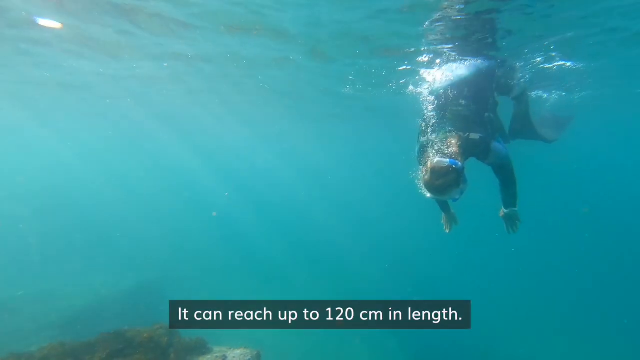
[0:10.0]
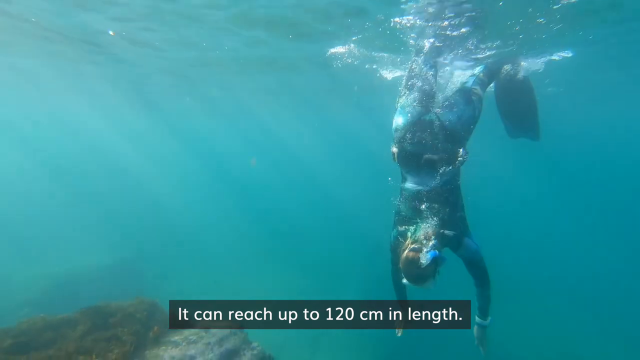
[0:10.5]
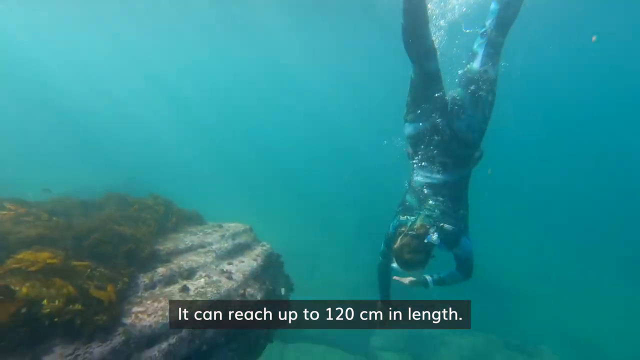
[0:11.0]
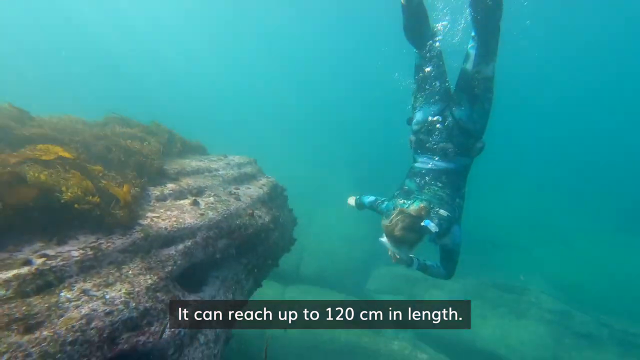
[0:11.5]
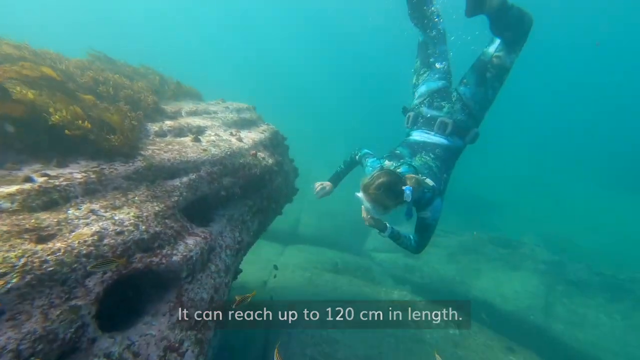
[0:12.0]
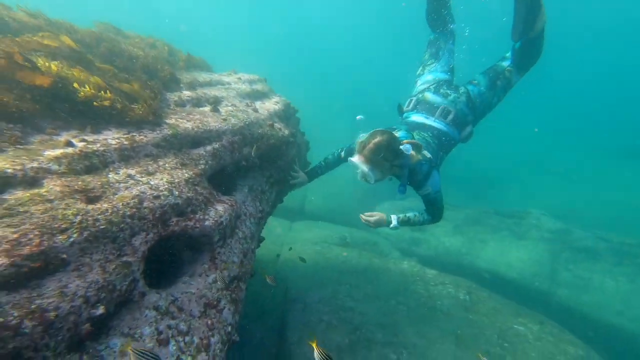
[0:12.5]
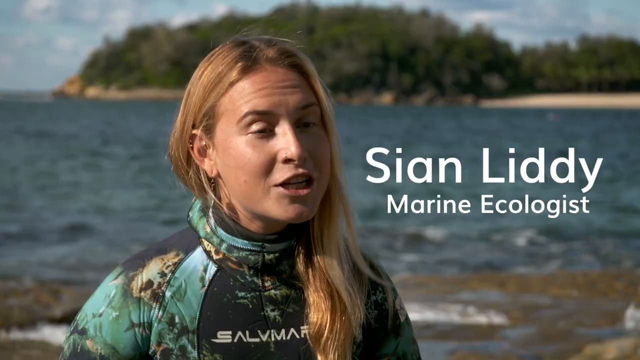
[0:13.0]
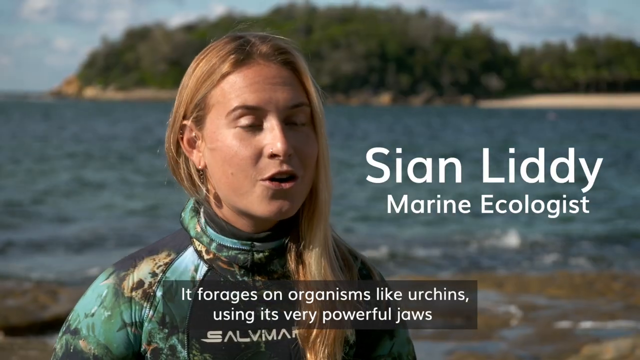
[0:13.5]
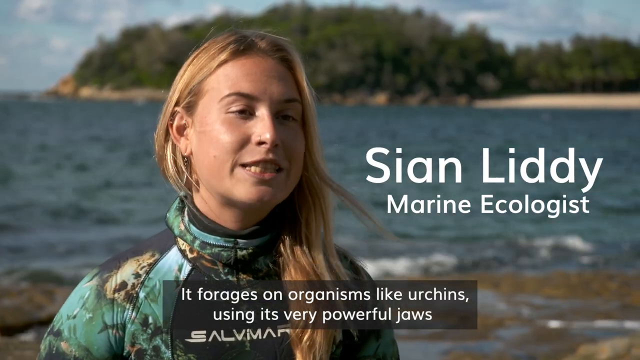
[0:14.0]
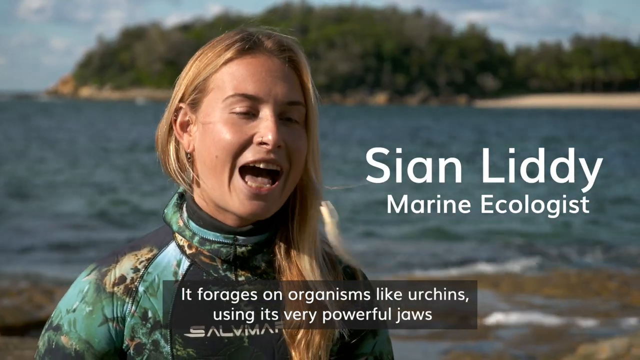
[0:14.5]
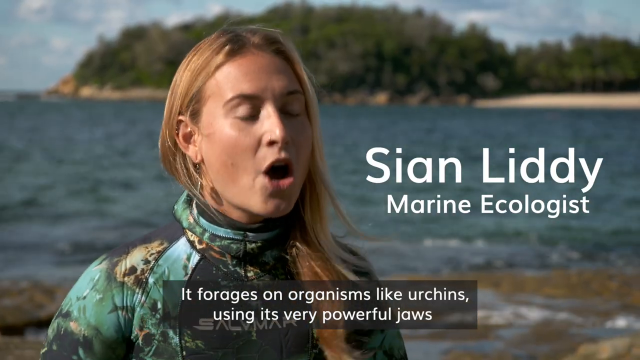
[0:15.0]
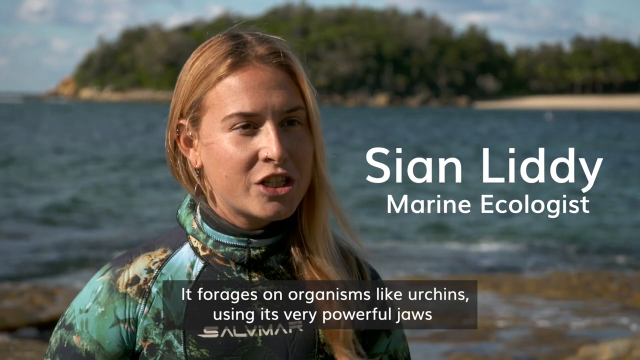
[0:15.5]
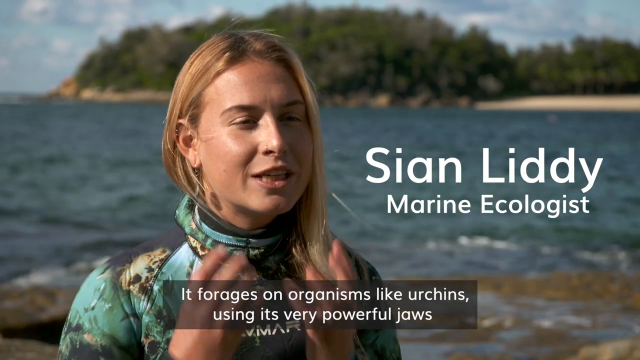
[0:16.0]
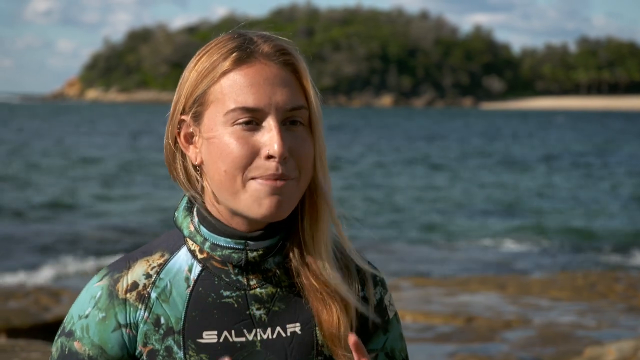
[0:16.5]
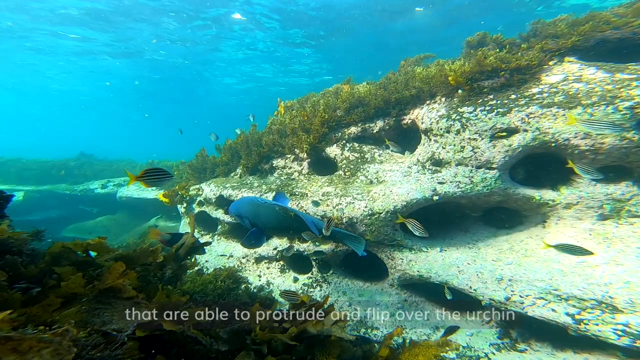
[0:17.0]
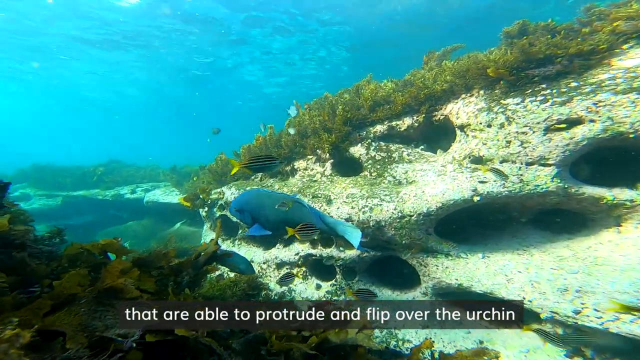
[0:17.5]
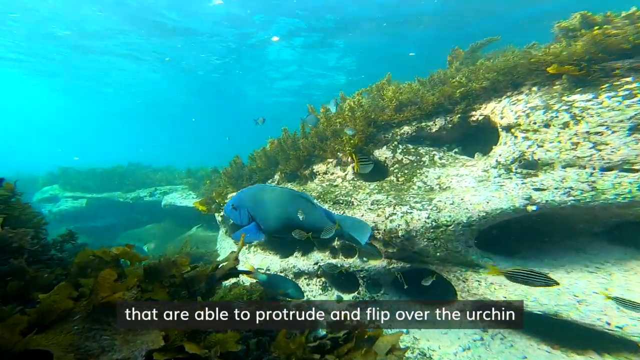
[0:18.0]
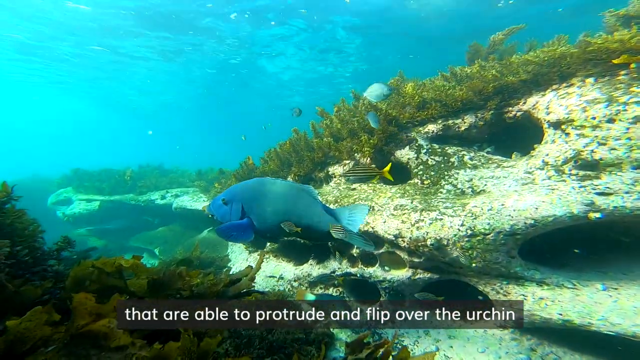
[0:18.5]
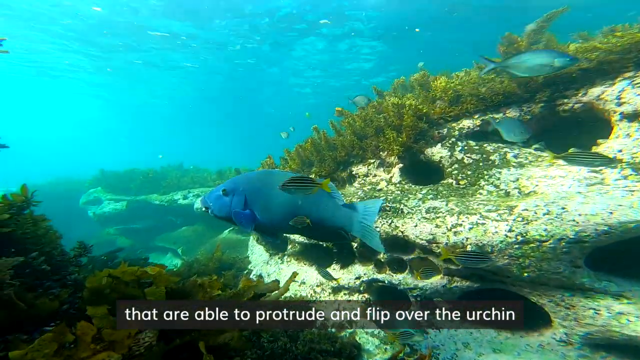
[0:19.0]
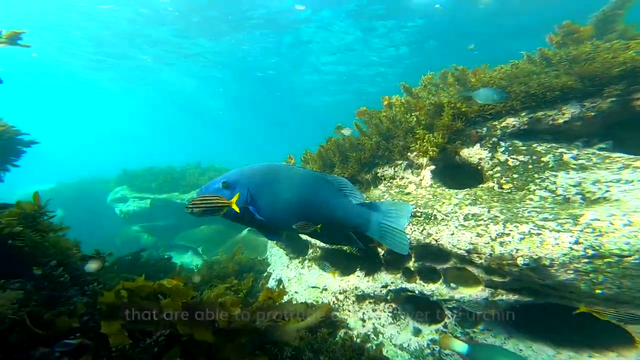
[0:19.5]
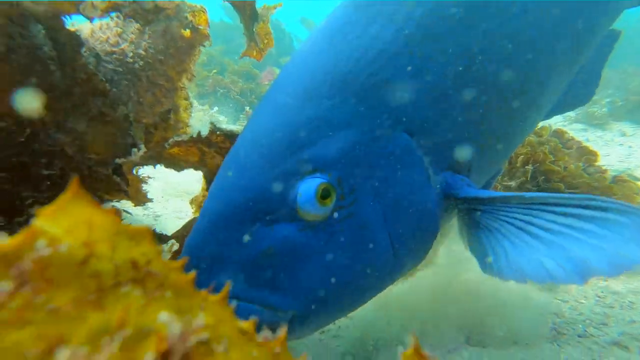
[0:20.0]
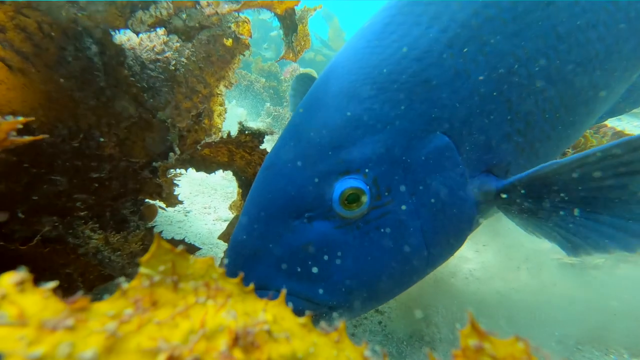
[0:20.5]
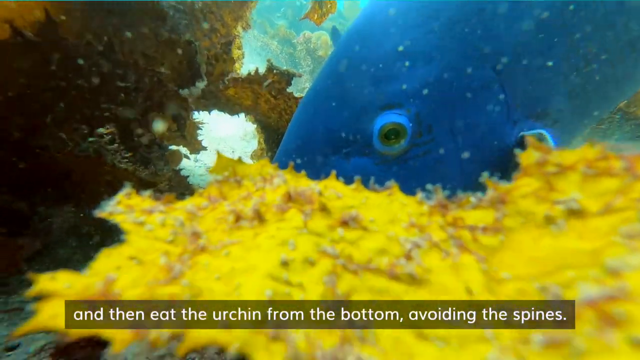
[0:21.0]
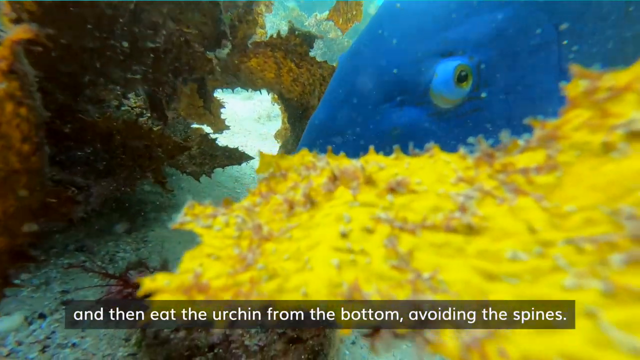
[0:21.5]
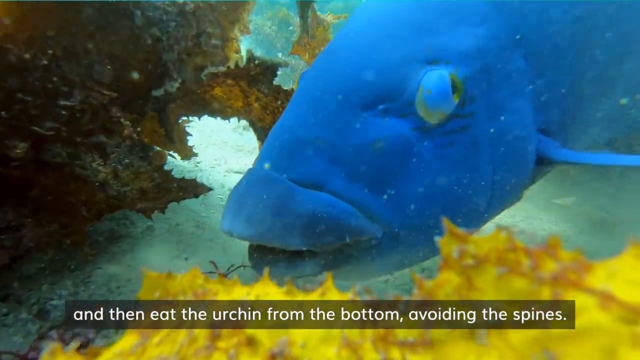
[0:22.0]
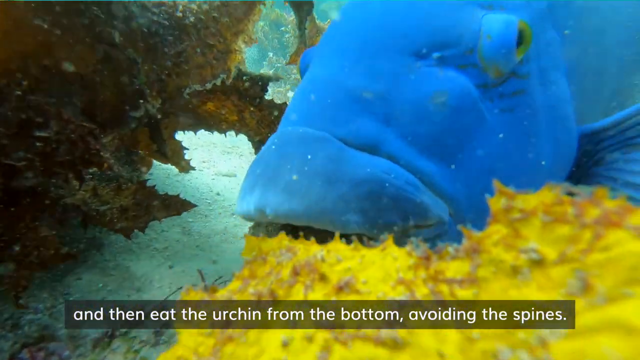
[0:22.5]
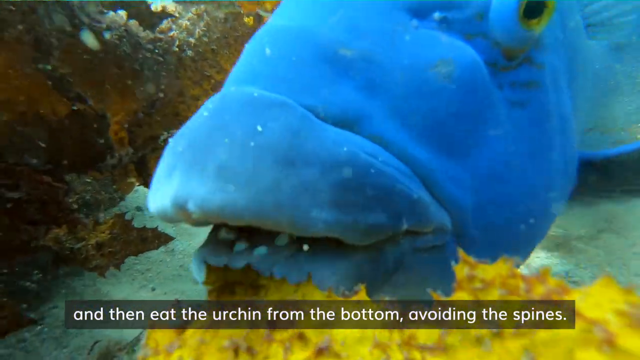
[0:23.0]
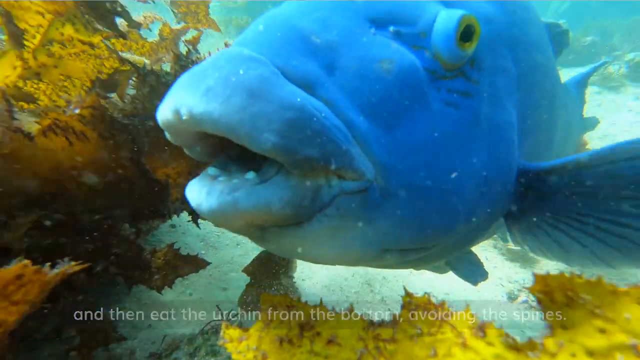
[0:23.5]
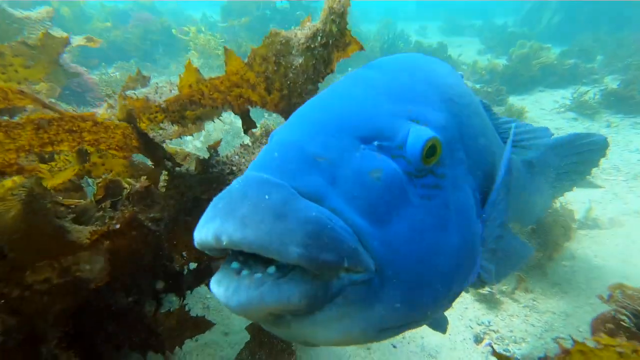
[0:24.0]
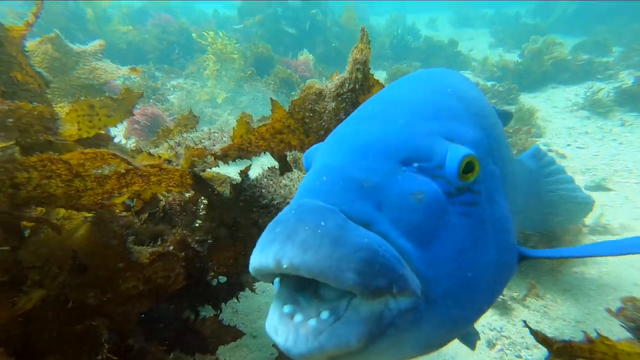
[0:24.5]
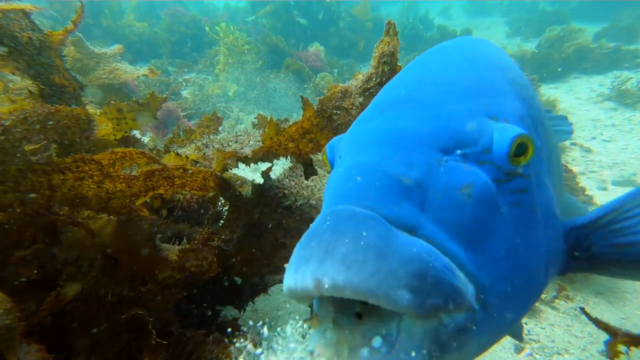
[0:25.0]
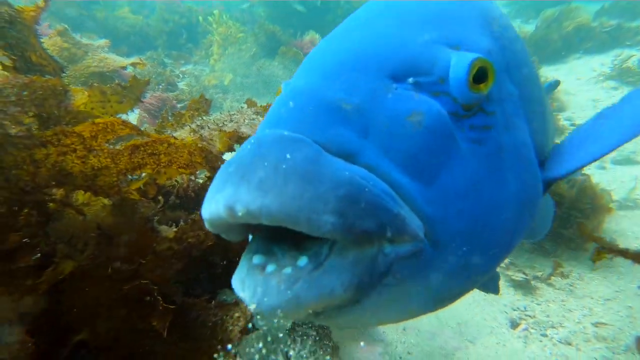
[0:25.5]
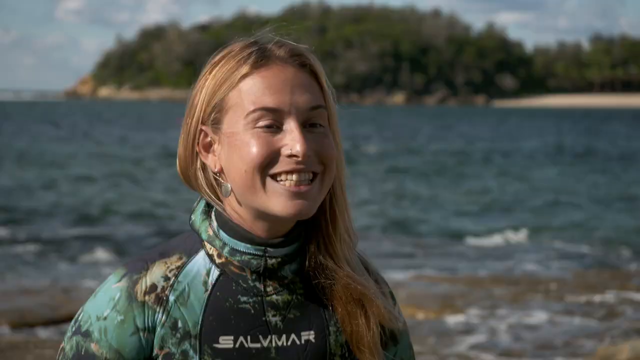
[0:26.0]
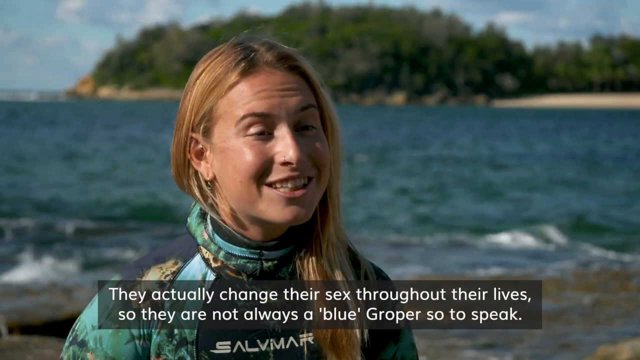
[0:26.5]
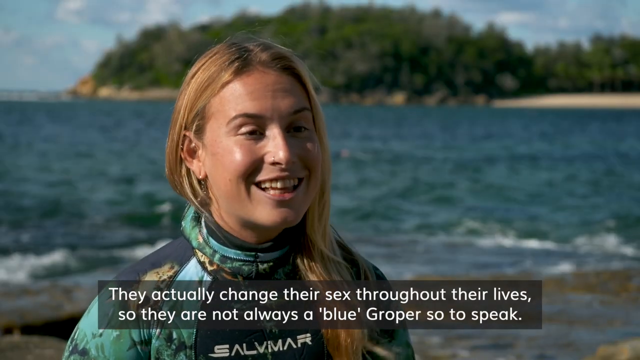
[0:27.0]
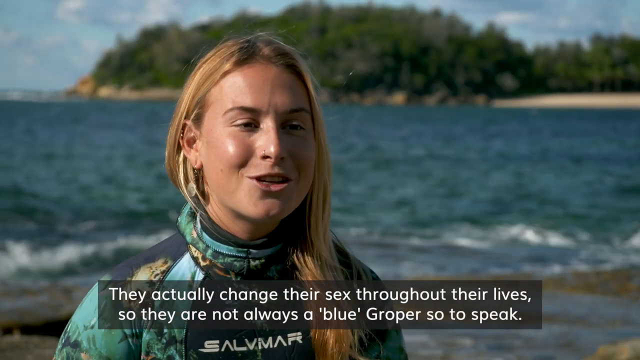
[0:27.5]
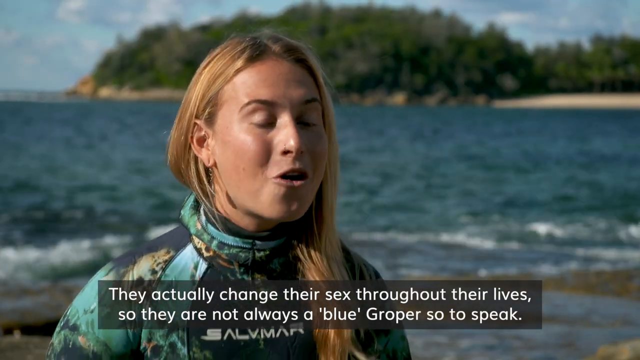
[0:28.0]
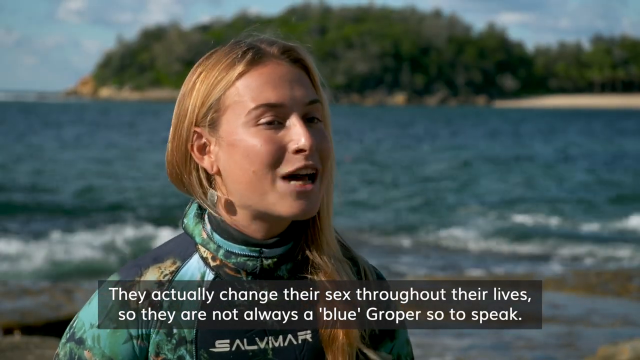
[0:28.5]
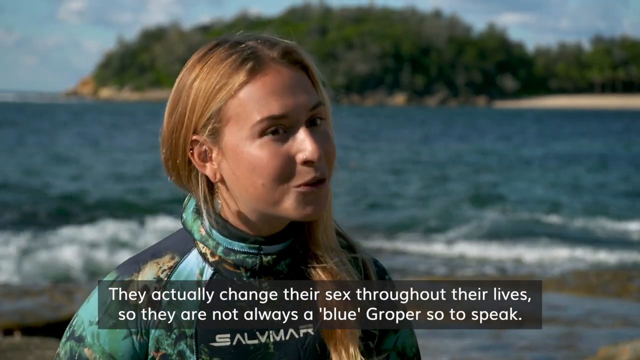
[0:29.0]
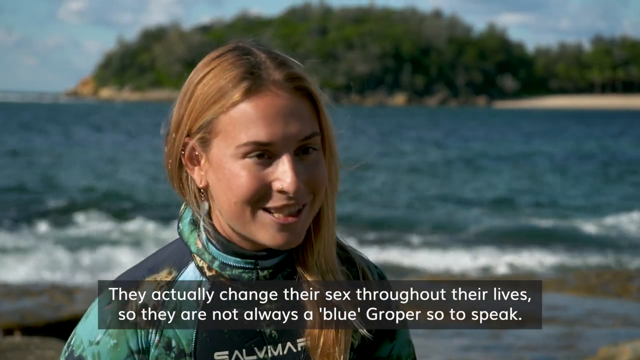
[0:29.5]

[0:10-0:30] Underwater, a diver moves below the surface, diving down toward the lower parts of the water. The video then changes to a woman talking on camera, with a body of water, apparently the ocean, behind her and a forest in the far distance. Her name is displayed on the screen: "Sian, marine ecologist". Other on-screen writing, beginning "If an organism like this", appears to show the words she is speaking, though not all of it is readable. The video then transitions to a blue fish moving.